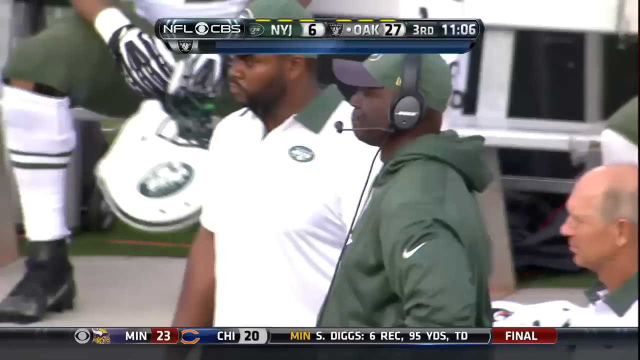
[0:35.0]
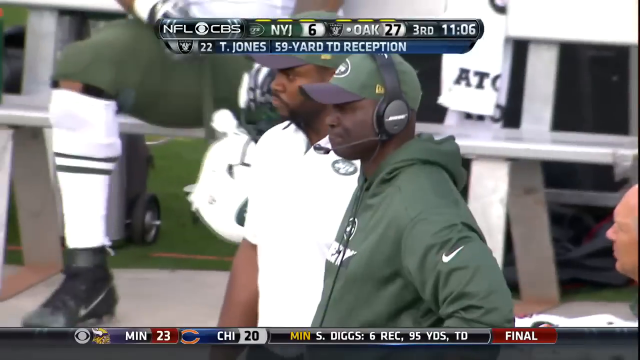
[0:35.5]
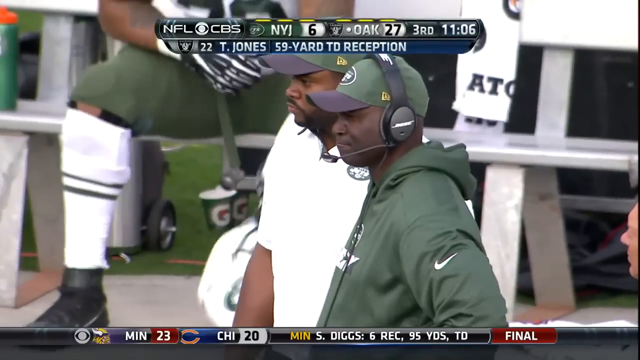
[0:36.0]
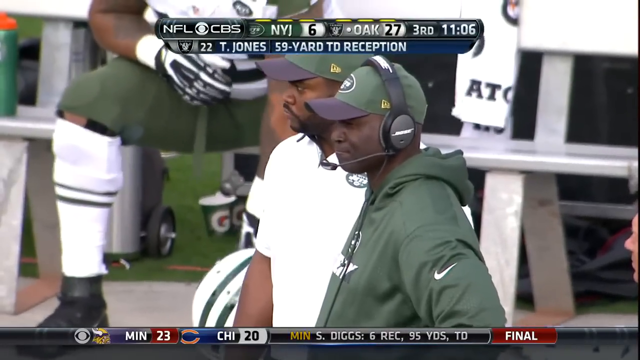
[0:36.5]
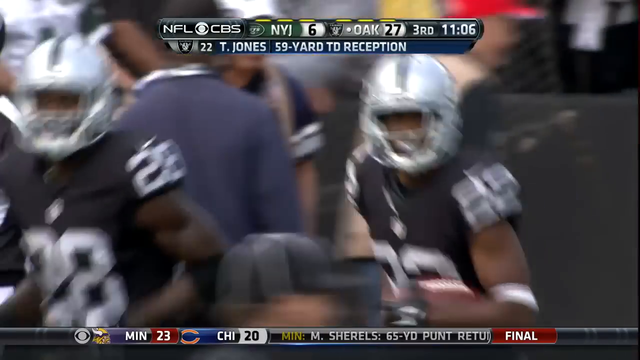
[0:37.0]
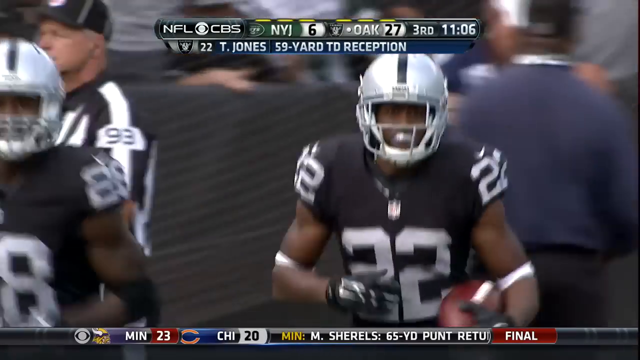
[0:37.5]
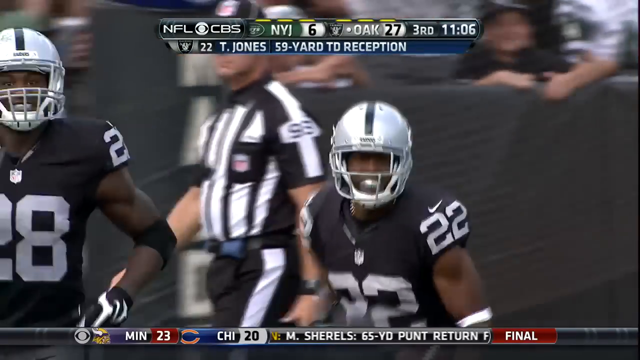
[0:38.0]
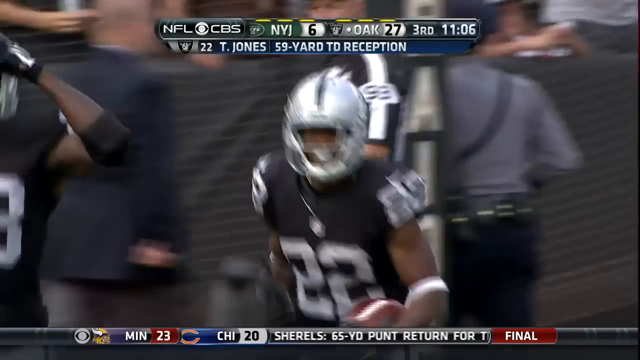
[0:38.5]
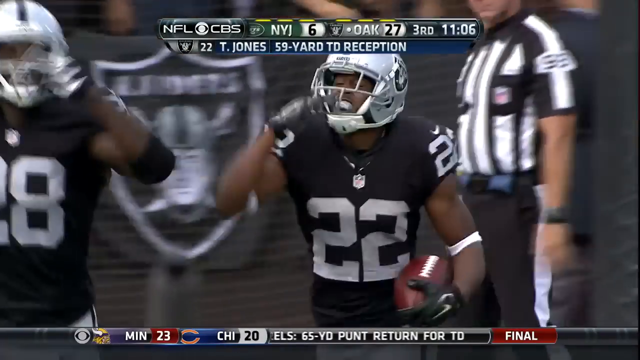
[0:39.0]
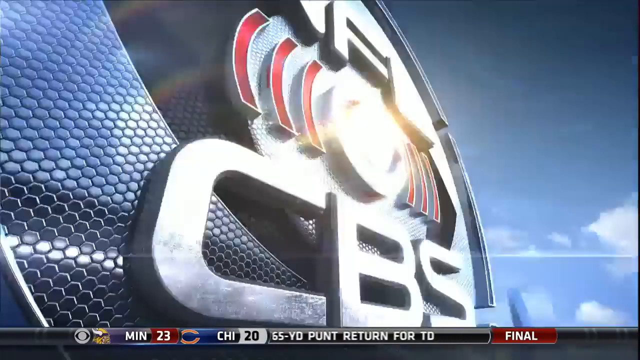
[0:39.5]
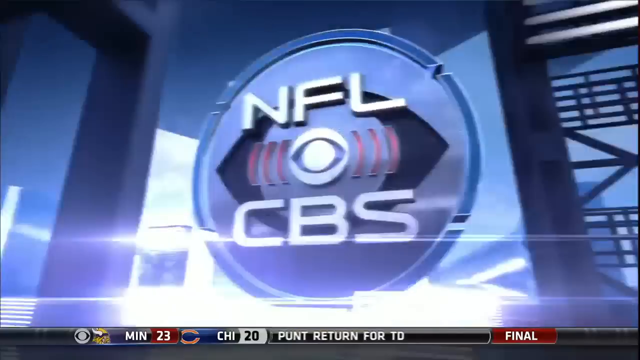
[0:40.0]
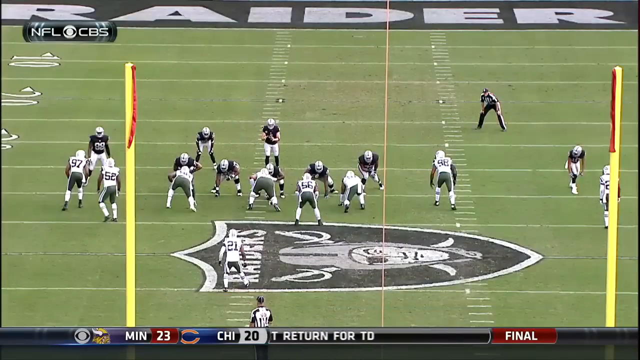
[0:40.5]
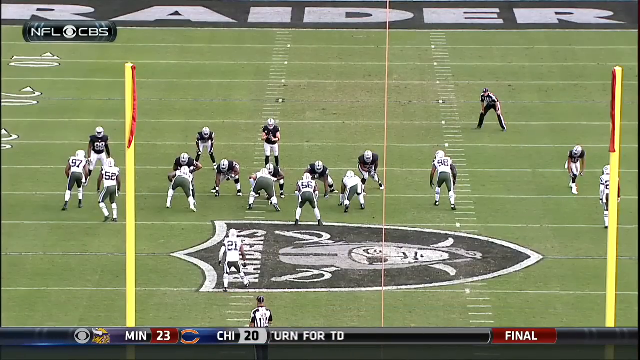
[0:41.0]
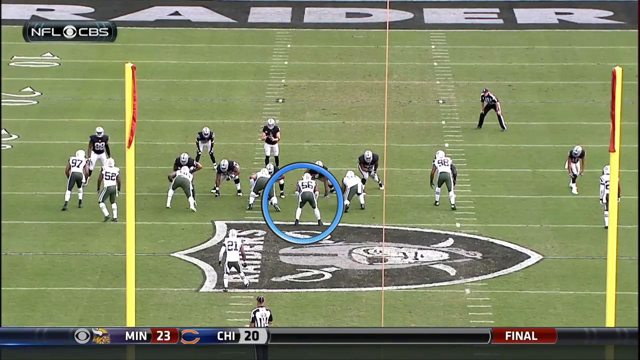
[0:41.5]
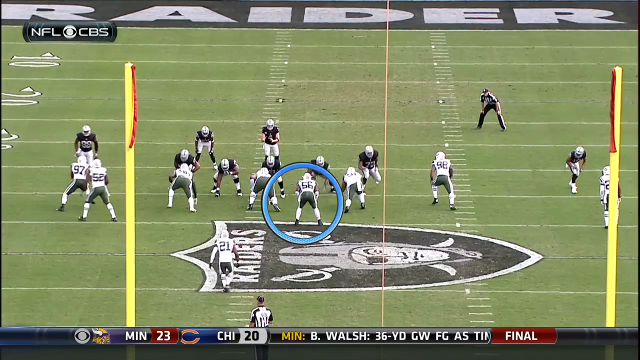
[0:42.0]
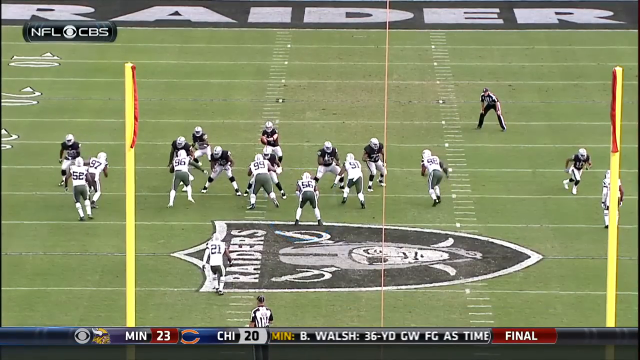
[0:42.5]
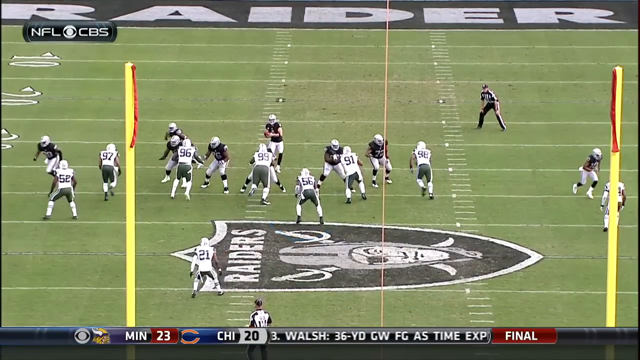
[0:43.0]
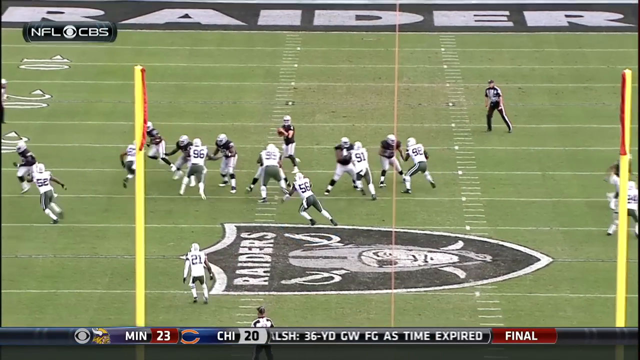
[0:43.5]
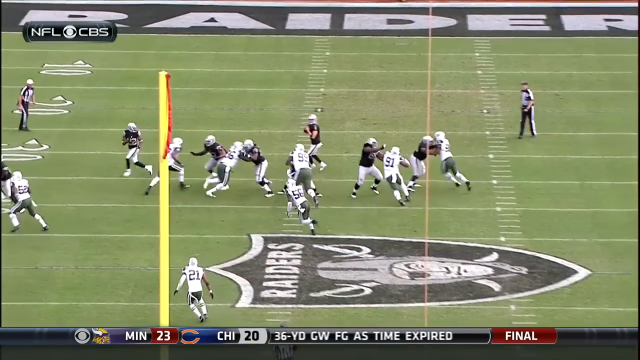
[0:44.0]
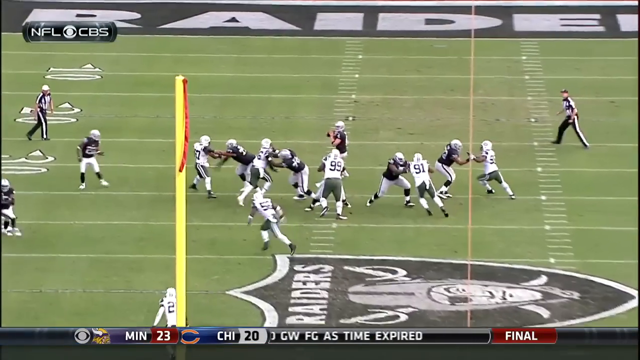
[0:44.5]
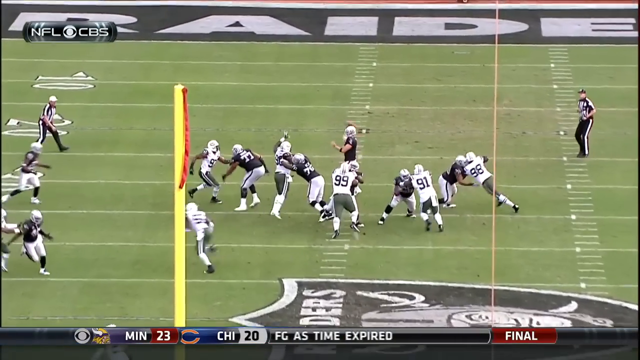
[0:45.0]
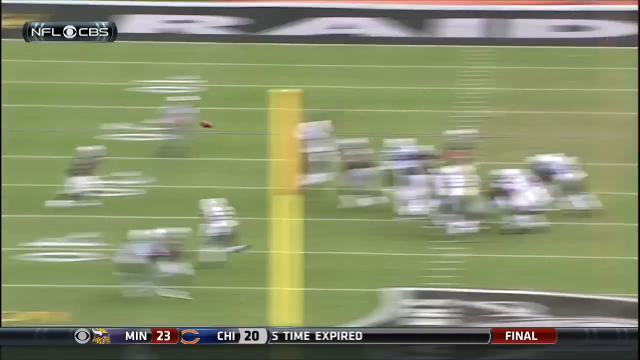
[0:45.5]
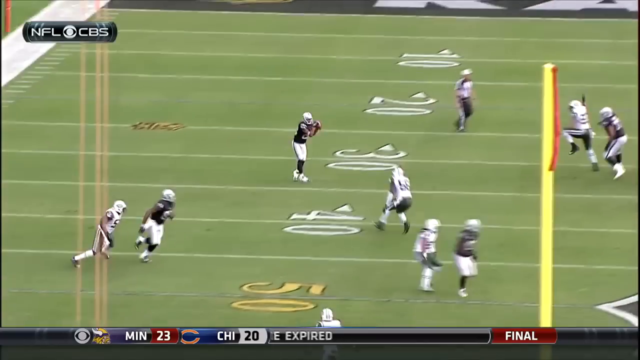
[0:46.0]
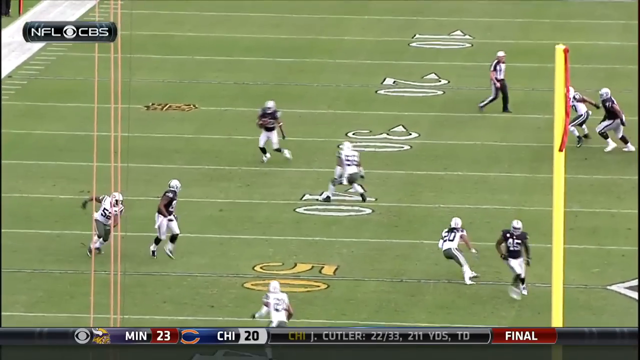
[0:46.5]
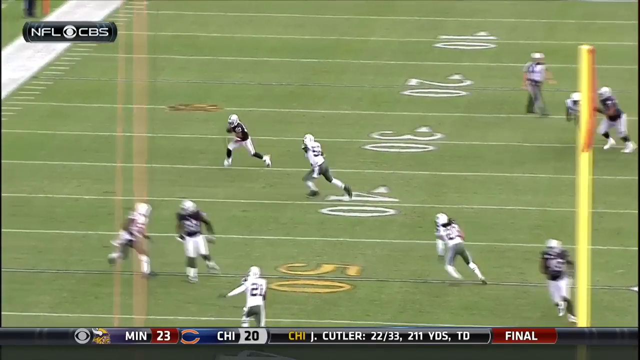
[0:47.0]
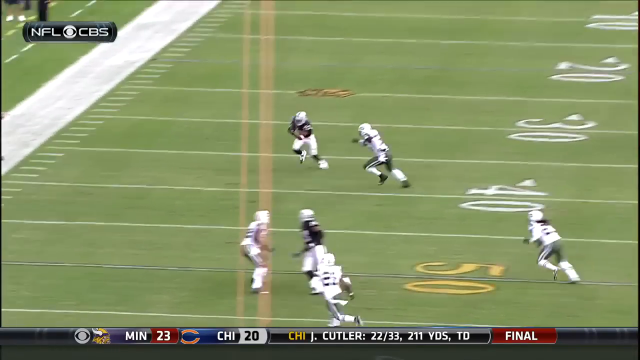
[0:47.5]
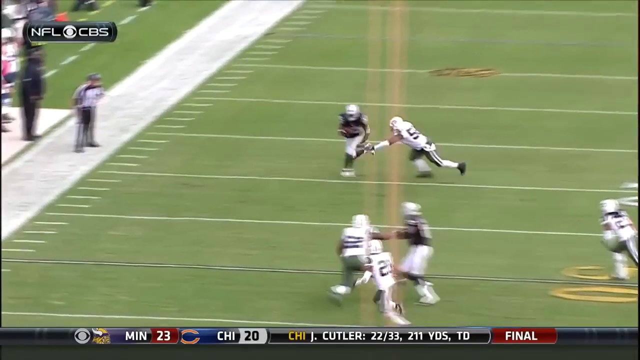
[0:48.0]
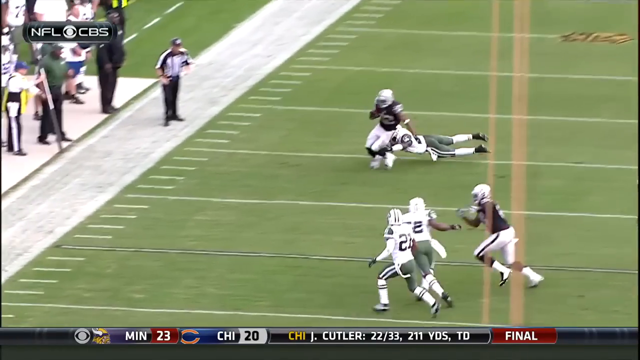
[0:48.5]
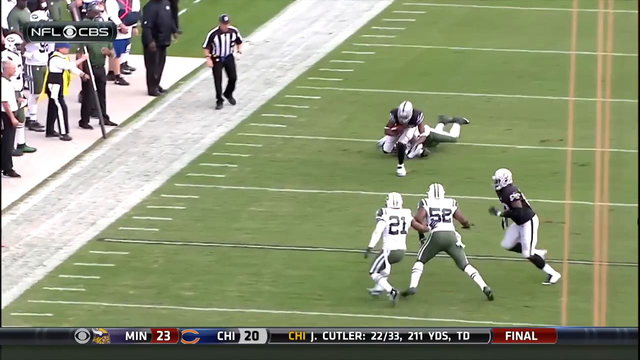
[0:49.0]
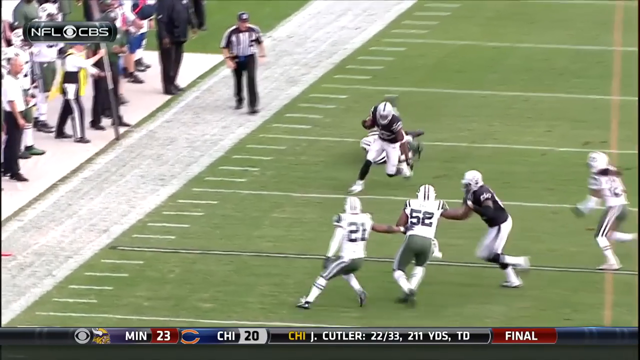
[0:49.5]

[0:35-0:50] Number 22, Taewon Jones, appears to have the ball after his 59-yard touchdown reception. The score reads Raiders 27, New York Jets 6, with the text "You're watching NFL on CBS"; it is the third quarter with 11 minutes left. Jones strikes a look-at-me pose. A replay of the touchdown follows, with number 56 indicated, apparently the player who was supposed to get Jones. Derek Carr gets the ball from the snap, surveys the field, and sees Jones leaking out on the right. Number 56, the safety, is about to tackle him but hesitates and misses the initial tackle. Jones sprints off, waits for the second defender, a player with cornrows, pushes him to the side, and takes off.